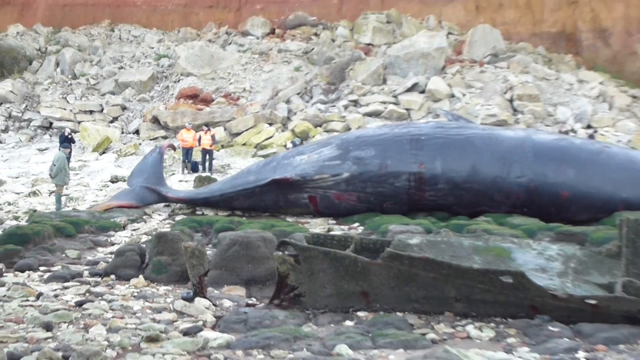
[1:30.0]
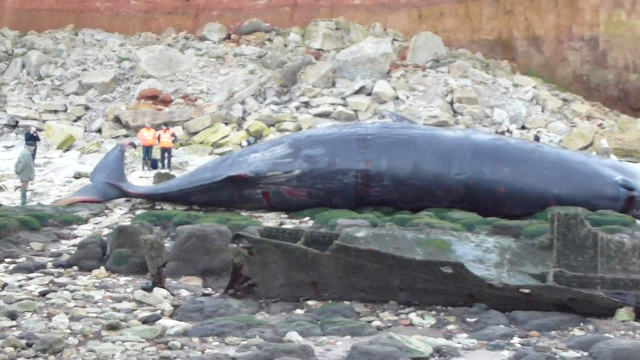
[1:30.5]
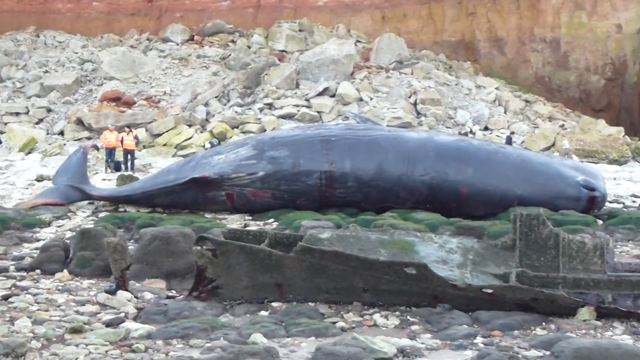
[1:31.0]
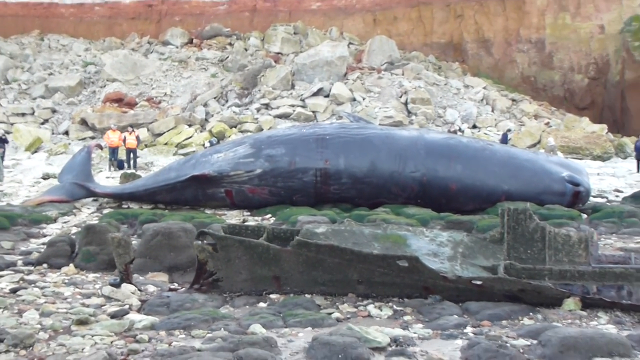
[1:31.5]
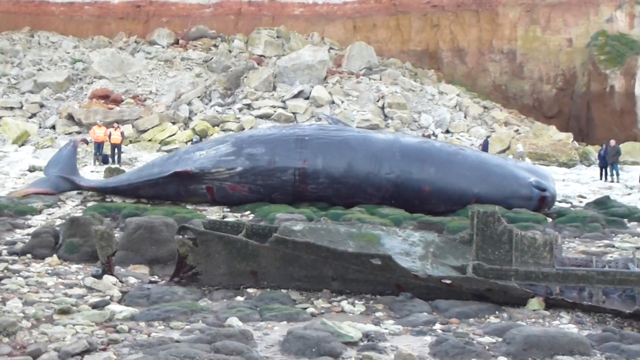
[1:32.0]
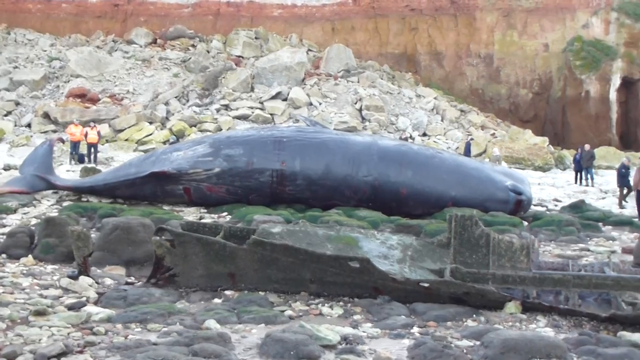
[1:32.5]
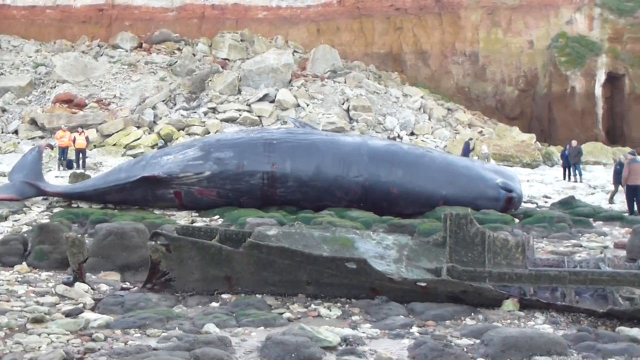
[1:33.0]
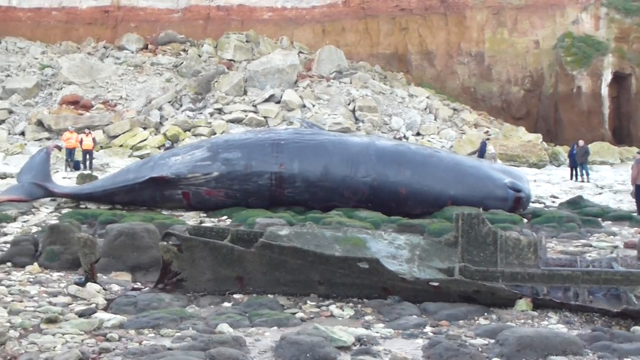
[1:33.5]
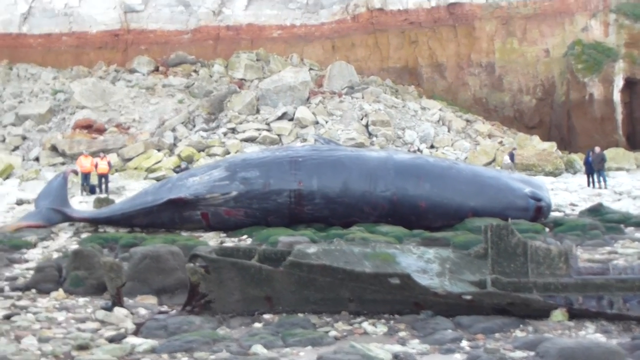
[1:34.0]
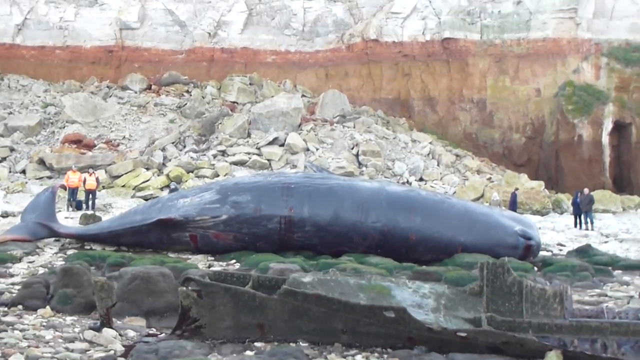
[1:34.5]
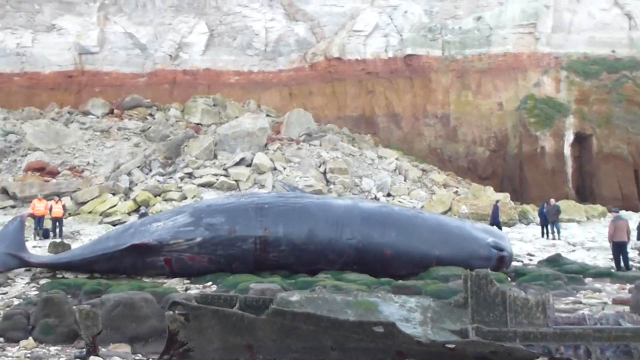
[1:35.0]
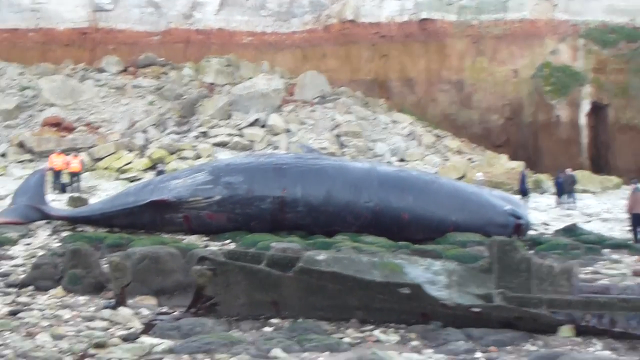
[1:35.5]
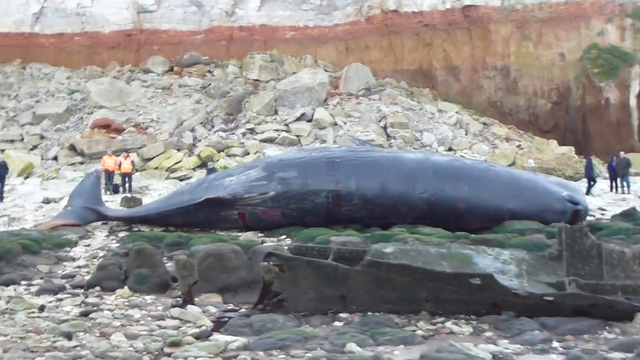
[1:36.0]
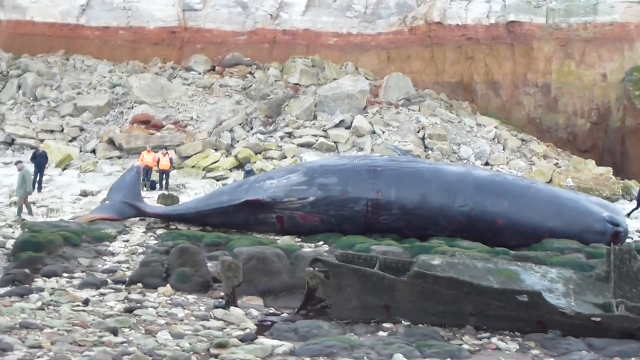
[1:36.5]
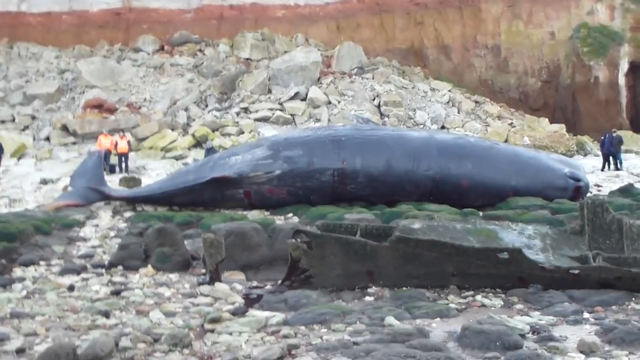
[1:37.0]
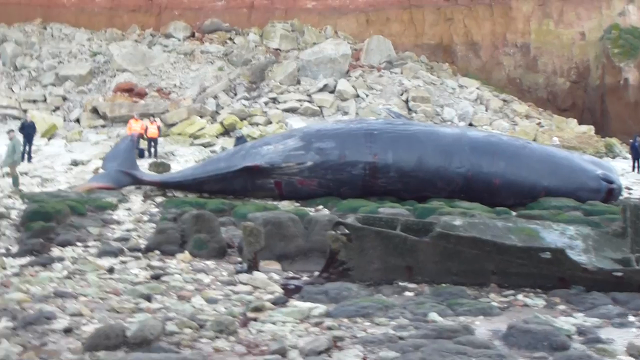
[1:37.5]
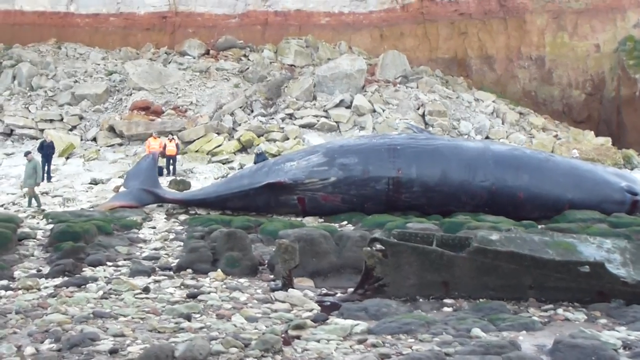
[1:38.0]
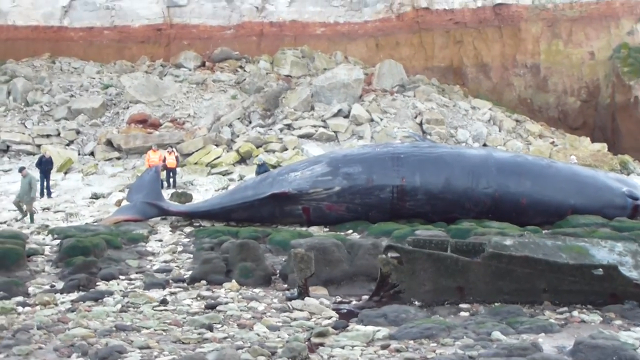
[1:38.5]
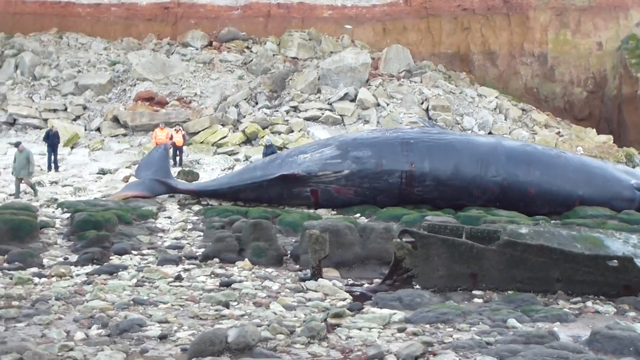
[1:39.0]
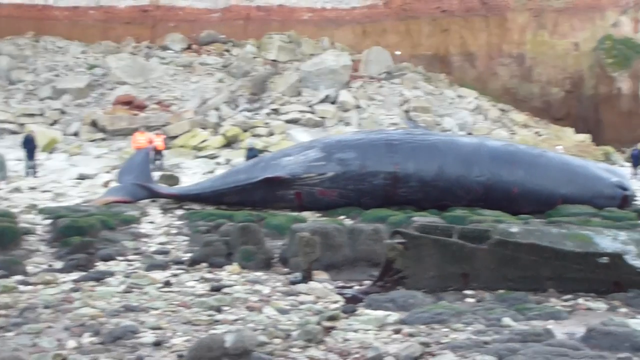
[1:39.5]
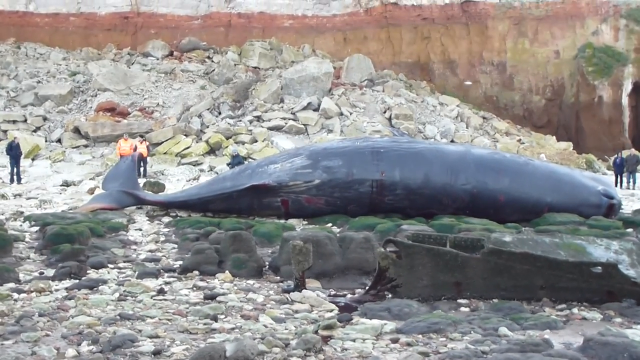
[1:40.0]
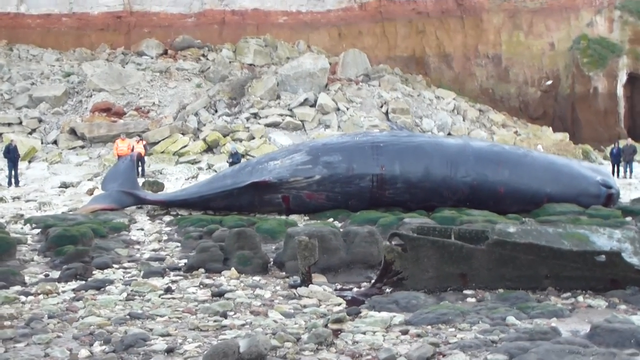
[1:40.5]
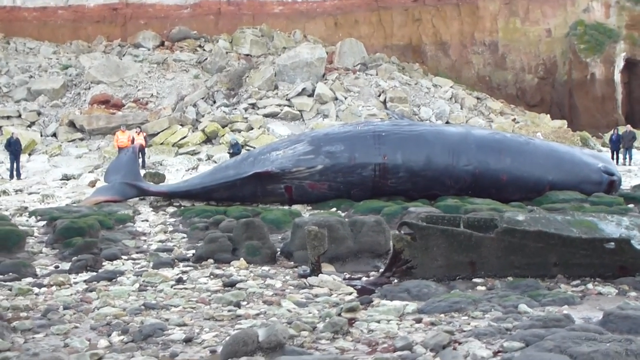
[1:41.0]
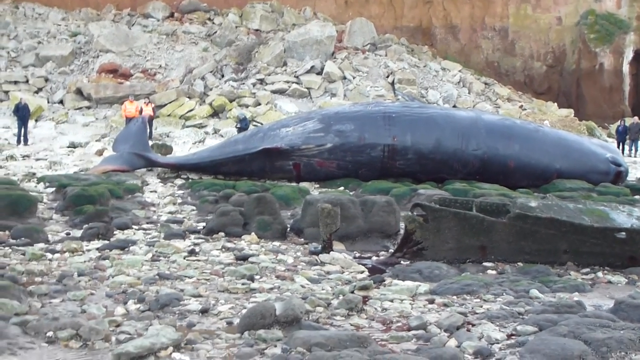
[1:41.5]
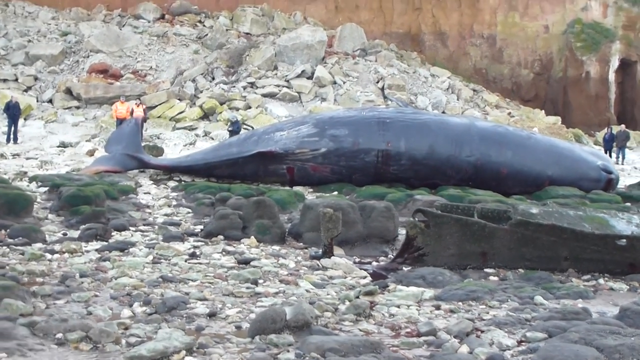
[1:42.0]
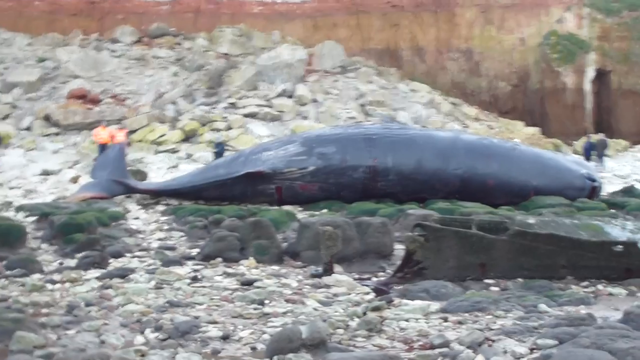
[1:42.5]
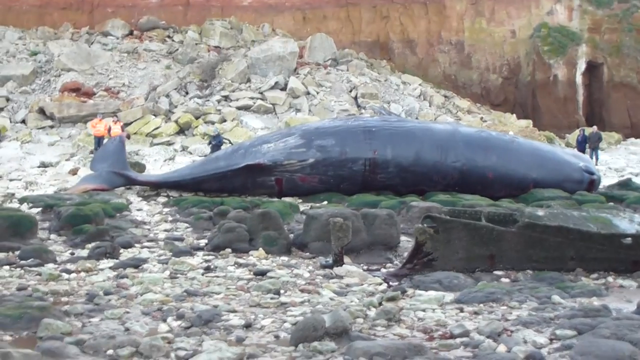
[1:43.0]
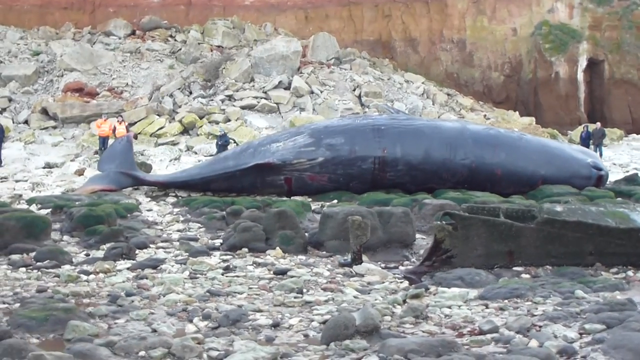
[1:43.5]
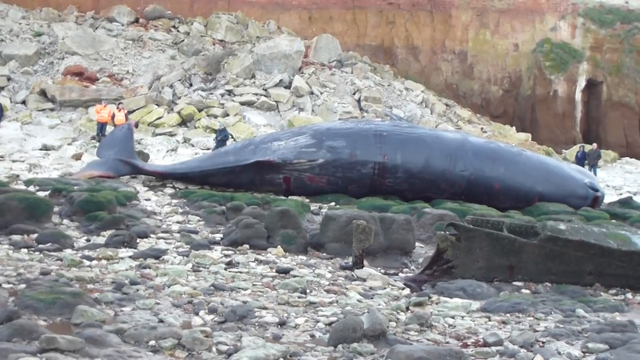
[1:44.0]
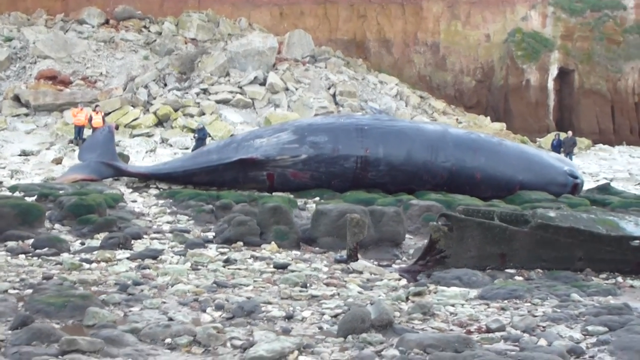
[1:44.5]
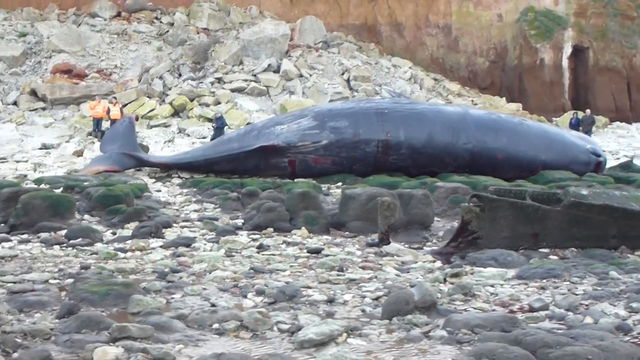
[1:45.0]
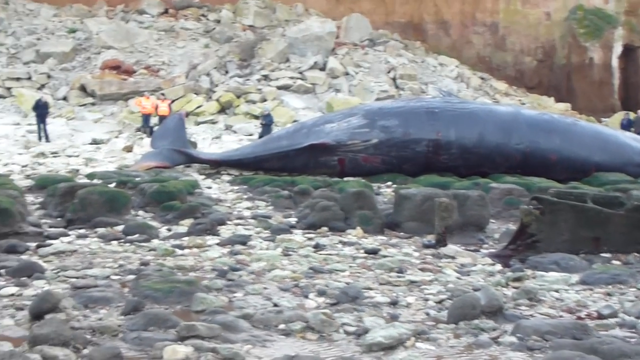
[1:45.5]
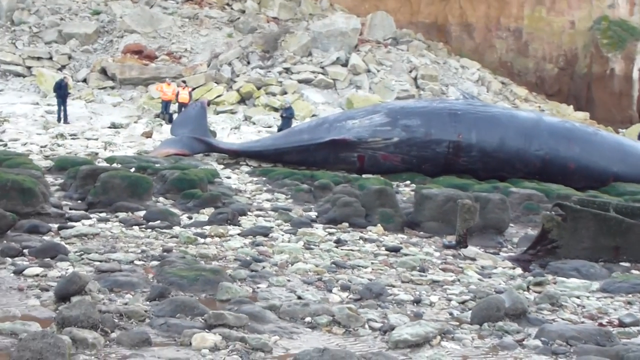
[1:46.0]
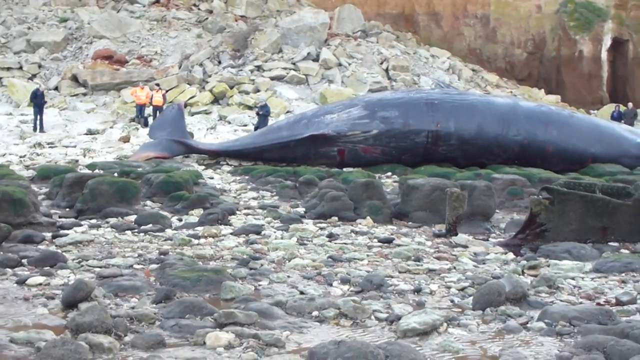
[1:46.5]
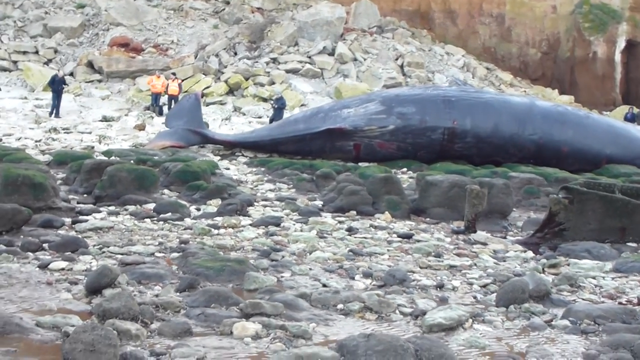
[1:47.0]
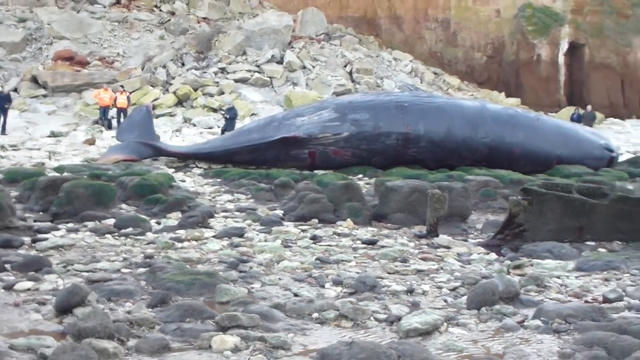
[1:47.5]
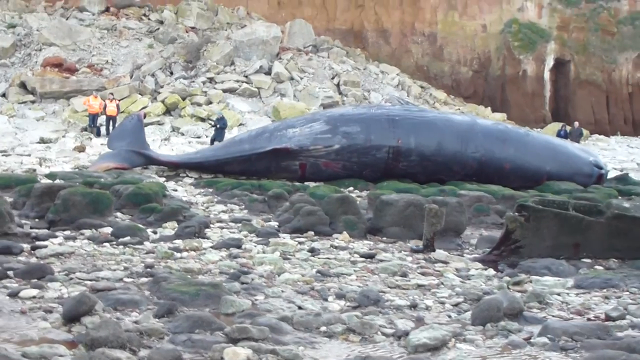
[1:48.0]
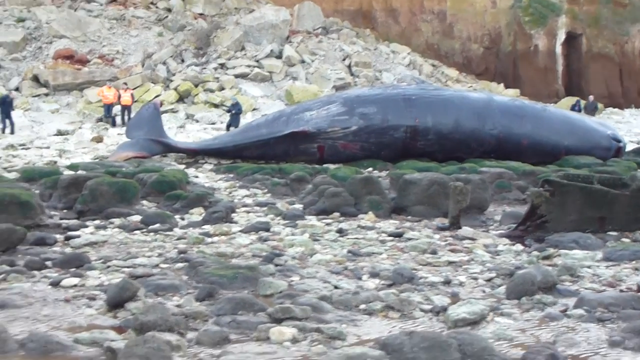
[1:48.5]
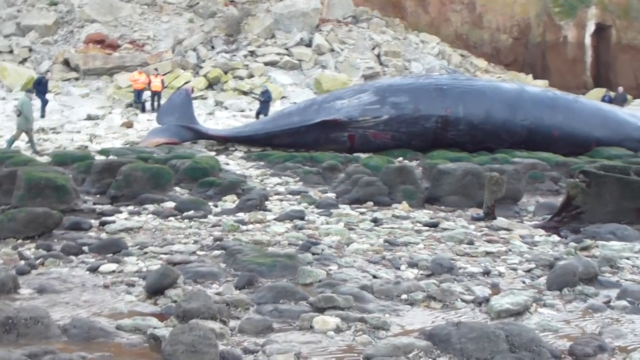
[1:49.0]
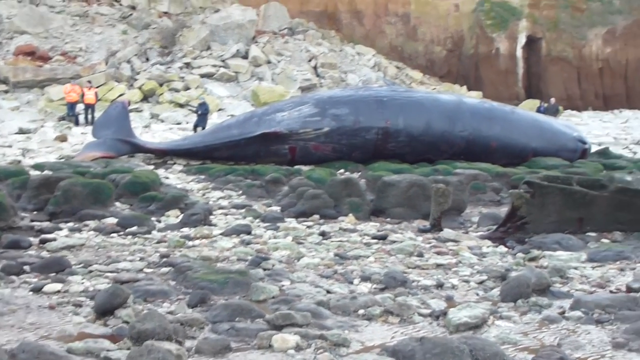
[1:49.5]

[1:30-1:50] In the daytime, a rocky, stony beach has rocks and stones of different sizes; some of the rocks appear to be boulders, ranging from dark gray to almost light white. The wreckage of a boat has been here for quite a while. The face of a mountain in the background is clay colored. On a green area that looks like moss lies a dead, dark gray whale with blood coming out of its nostrils. It lies on its right side, and the length of its back is visible. There are cuts all along its back, and where its body begins to taper toward its tail there are deep gashes. People stand around looking at it.